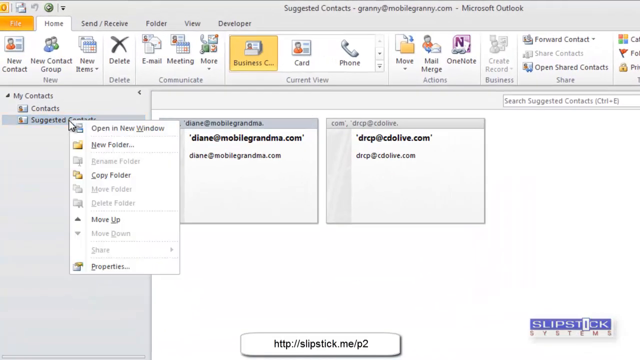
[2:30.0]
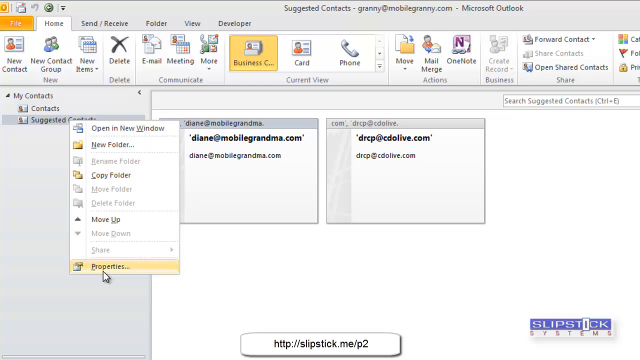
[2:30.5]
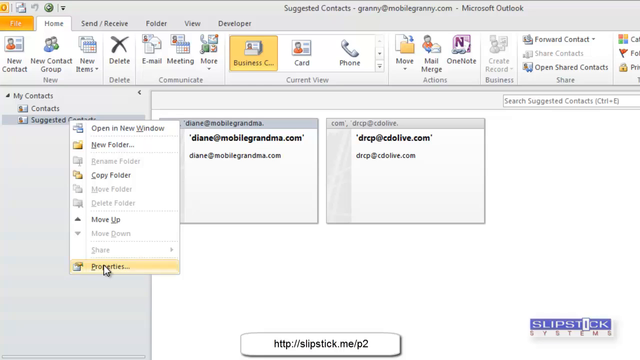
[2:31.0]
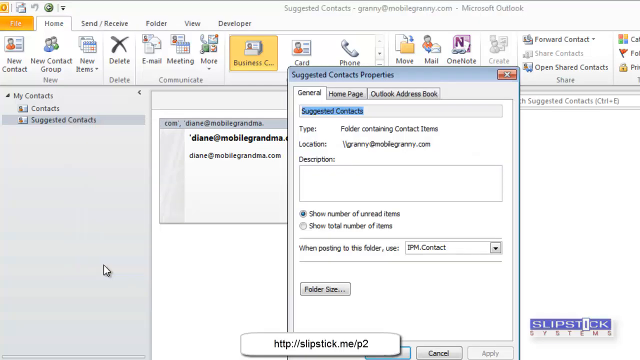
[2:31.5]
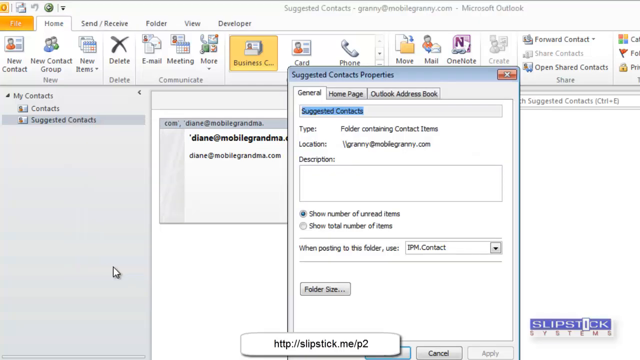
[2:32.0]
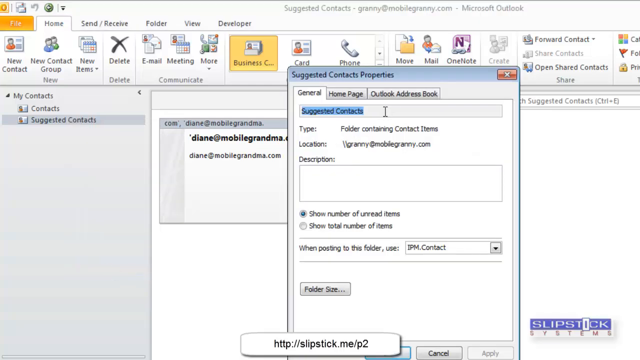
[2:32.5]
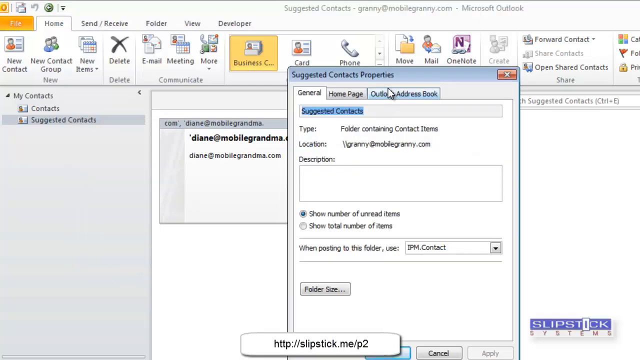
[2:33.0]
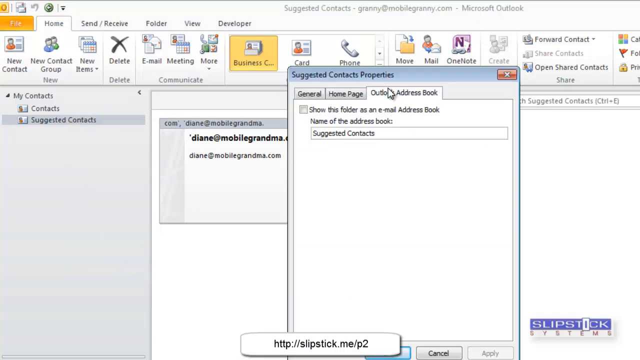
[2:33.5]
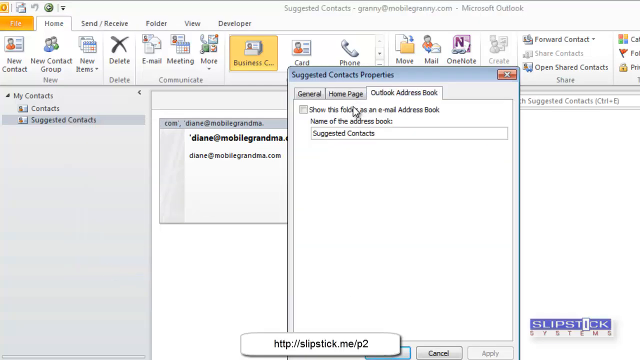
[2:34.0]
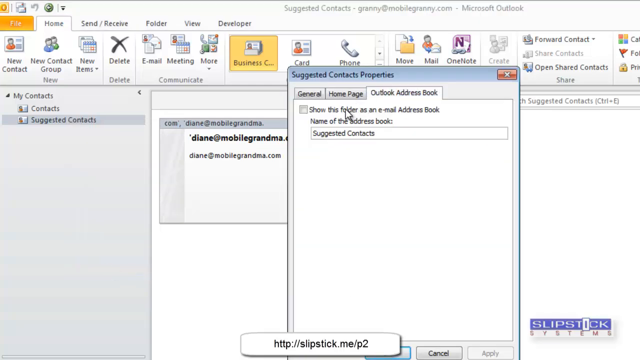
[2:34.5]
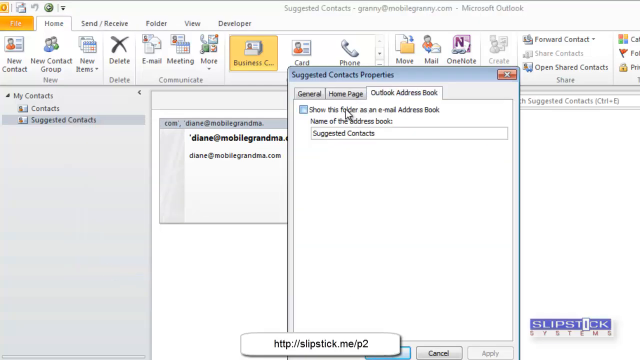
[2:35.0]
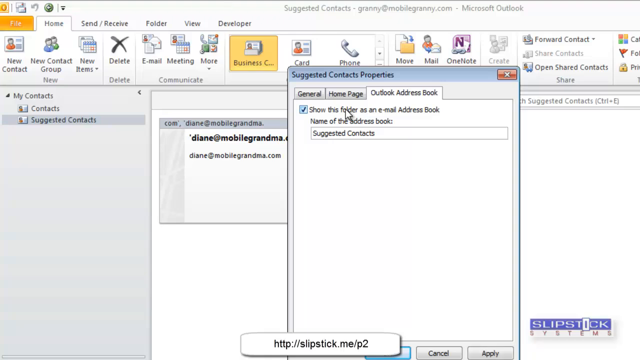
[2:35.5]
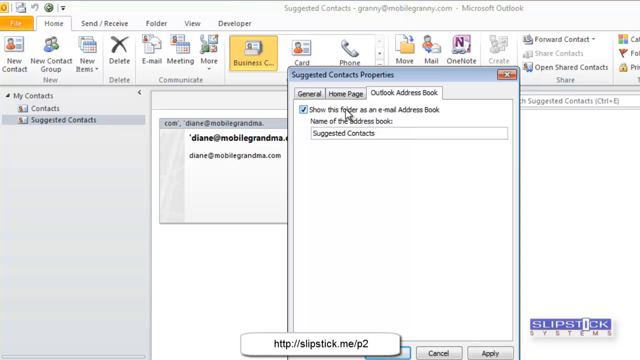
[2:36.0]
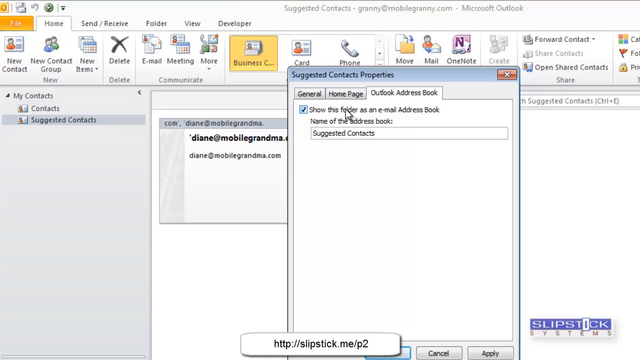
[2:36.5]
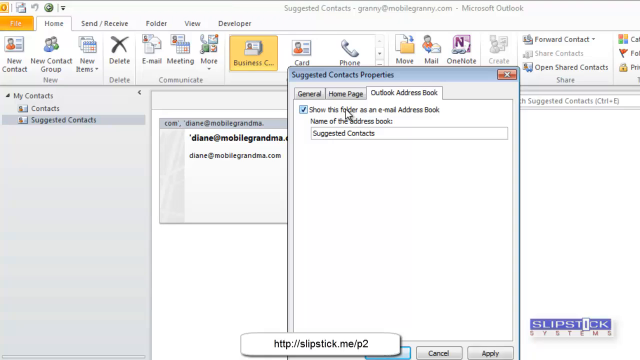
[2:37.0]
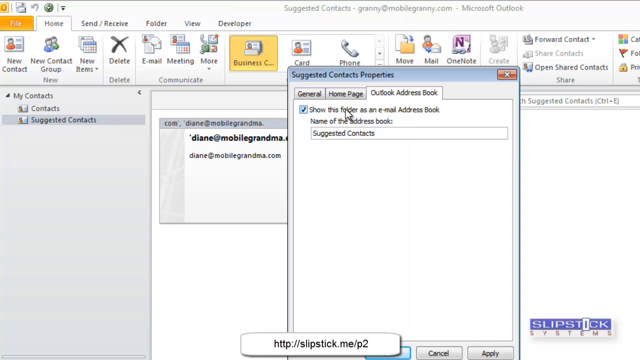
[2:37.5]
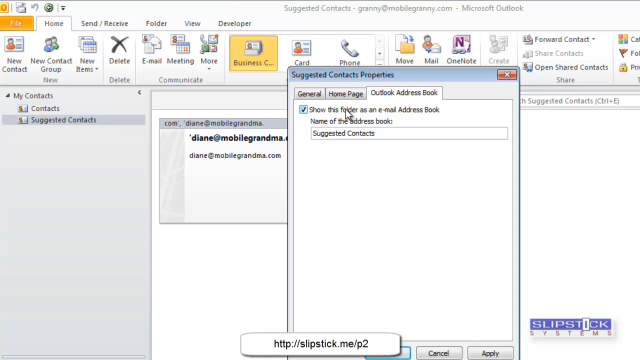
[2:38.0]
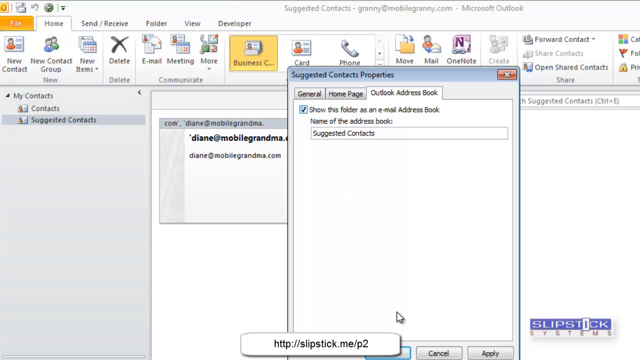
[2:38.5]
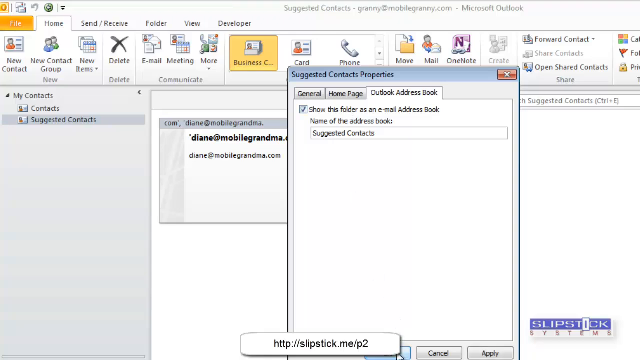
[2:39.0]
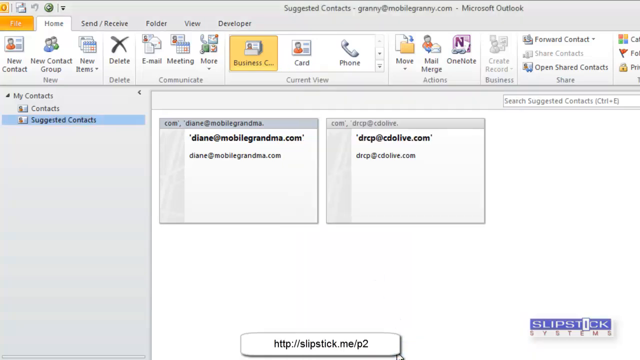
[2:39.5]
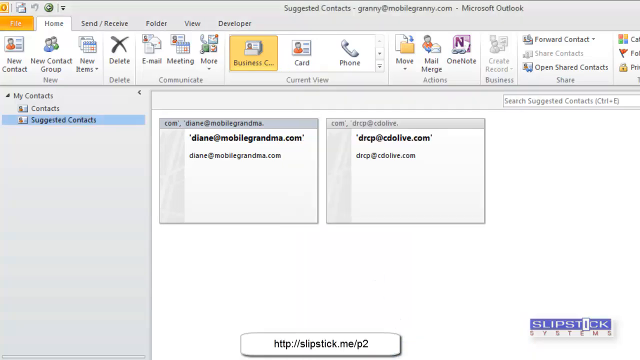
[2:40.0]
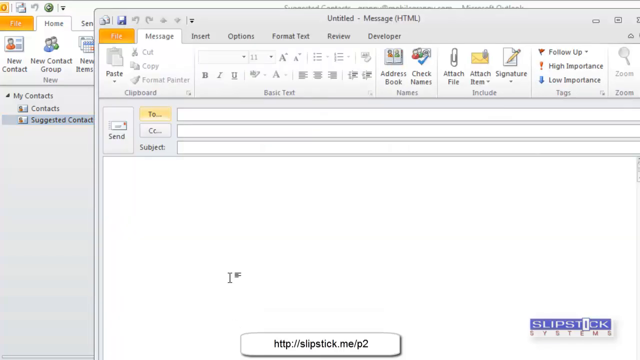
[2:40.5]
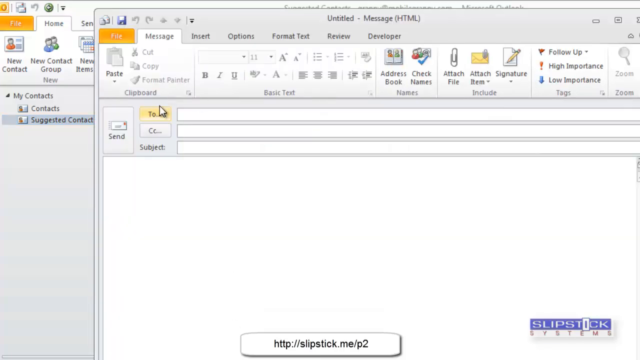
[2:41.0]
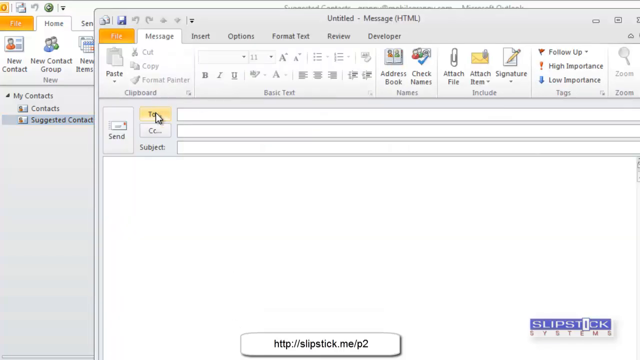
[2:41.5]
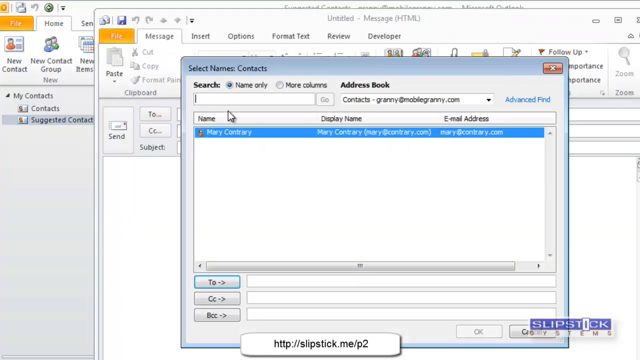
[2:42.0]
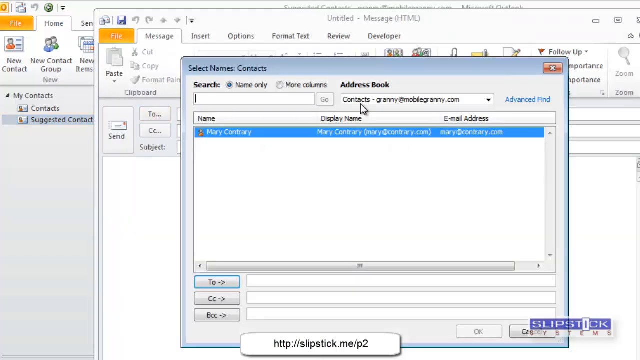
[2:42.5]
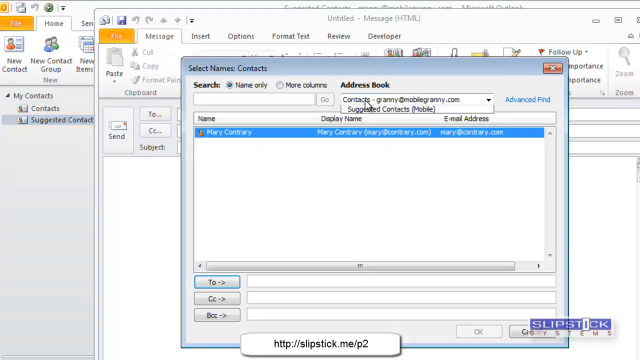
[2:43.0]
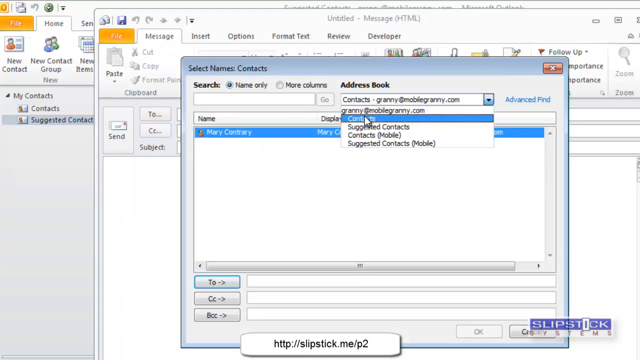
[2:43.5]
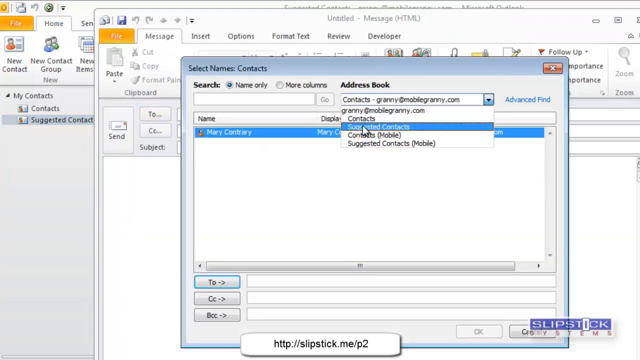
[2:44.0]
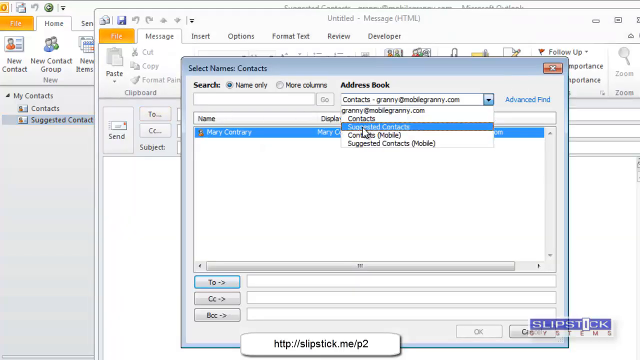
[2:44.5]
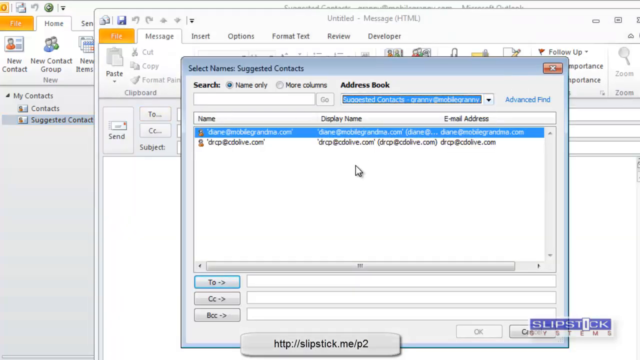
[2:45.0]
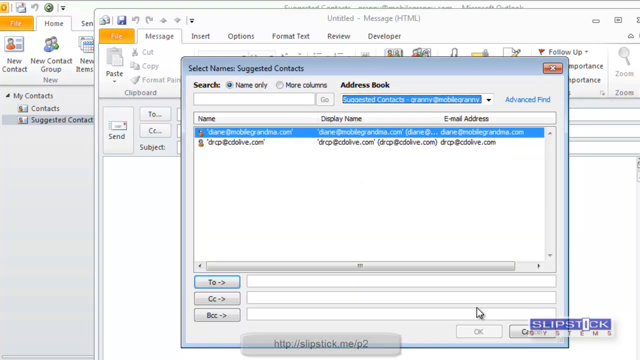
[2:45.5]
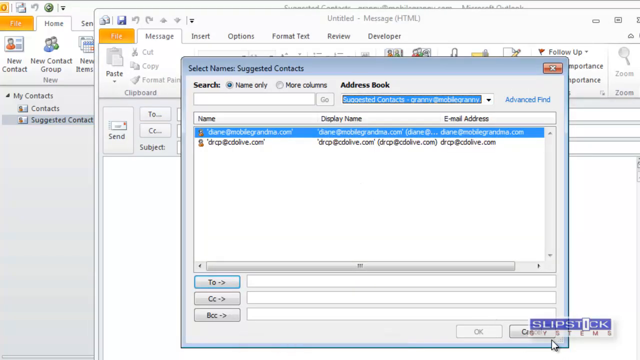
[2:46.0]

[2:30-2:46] The user keeps looking at the same contact information, bouncing around through contacts, suggested contacts and message options without doing much. They then appear to click on Properties, bringing up Suggested Contacts Properties. At the top are selectable tabs for General, Homepage and Outlook Address Book. Below that, Suggested Contacts is highlighted in blue, followed by Type, Folder Containing Contact Items, and Location. Description is blank. There are selectable options for Show Number of Unread Items or Show Total Number of Items. The person selects Outlook Address Book and closes the window. Back on the messaging window, they scroll through their contacts before eventually closing contacts yet again.